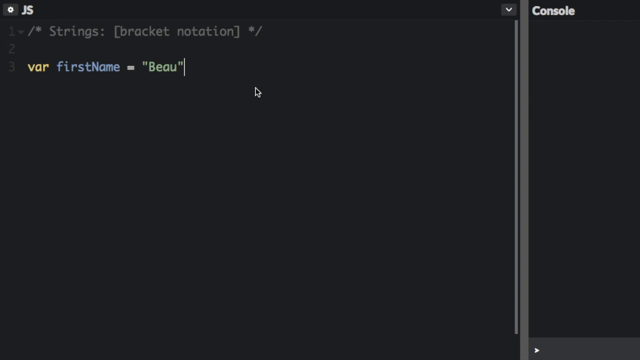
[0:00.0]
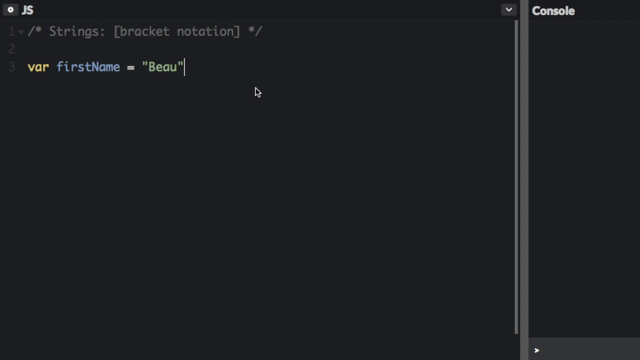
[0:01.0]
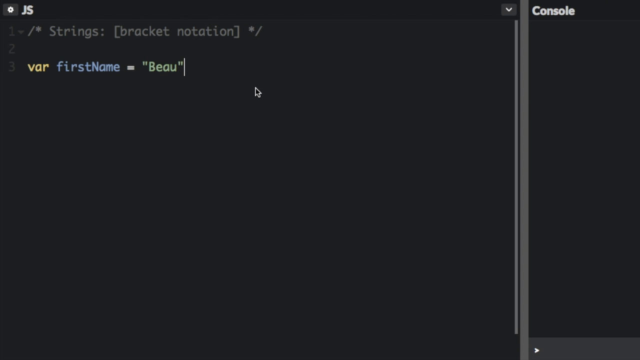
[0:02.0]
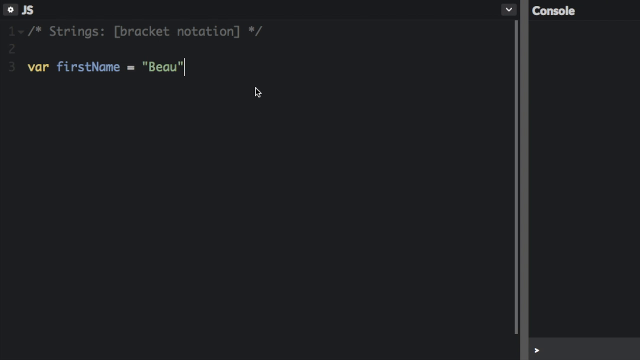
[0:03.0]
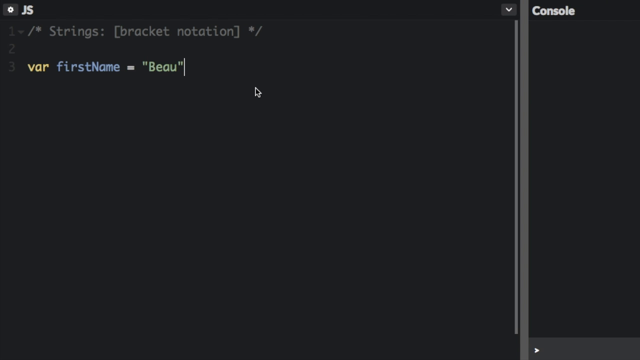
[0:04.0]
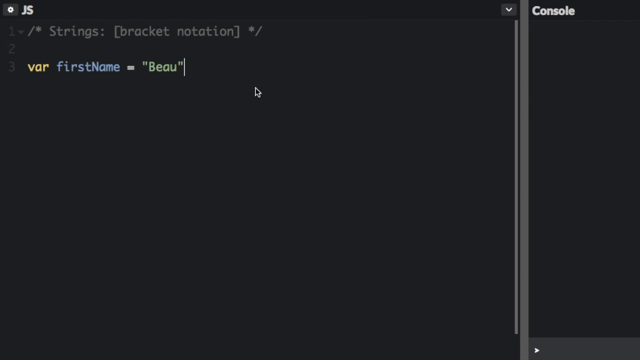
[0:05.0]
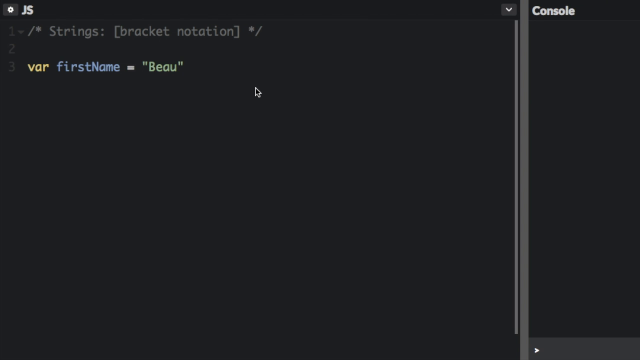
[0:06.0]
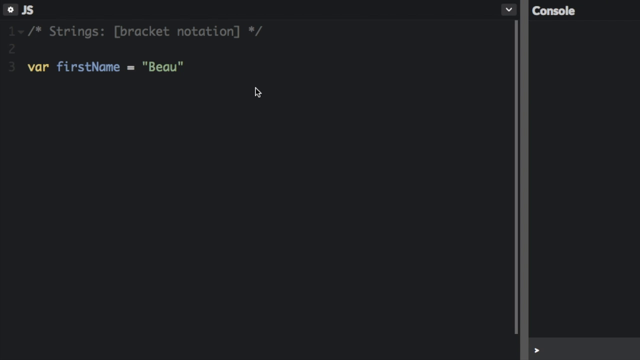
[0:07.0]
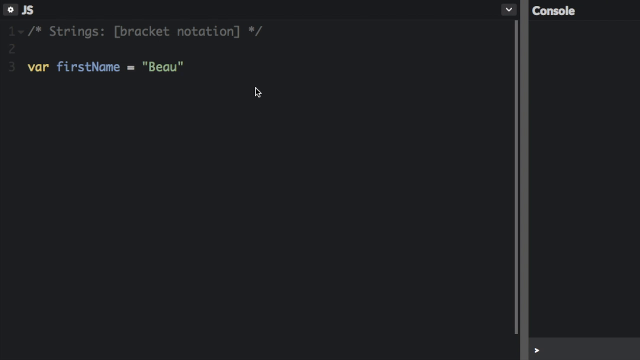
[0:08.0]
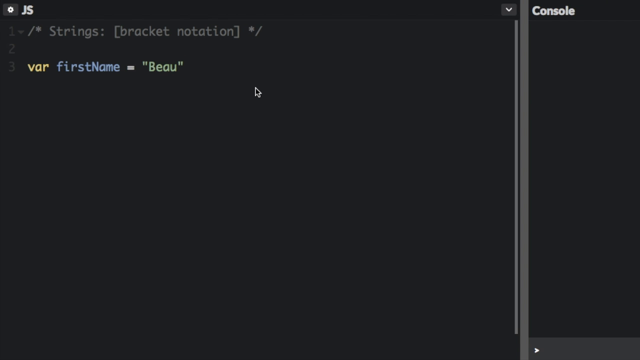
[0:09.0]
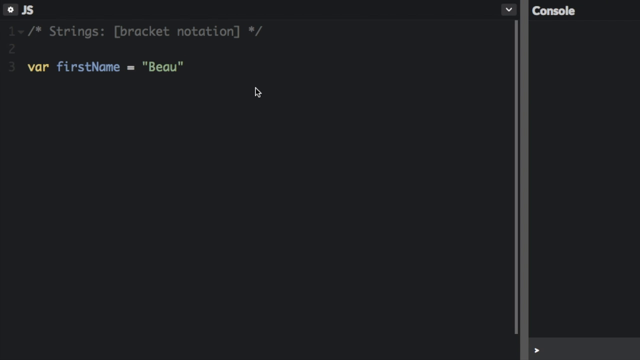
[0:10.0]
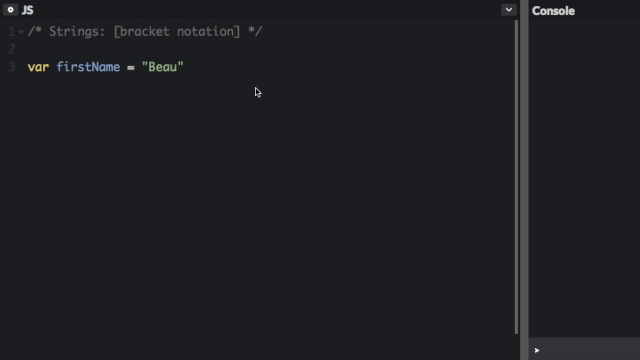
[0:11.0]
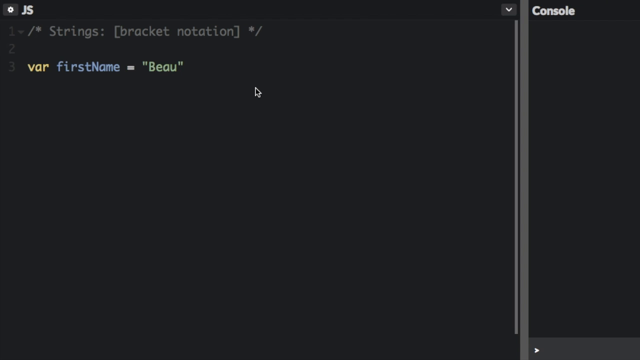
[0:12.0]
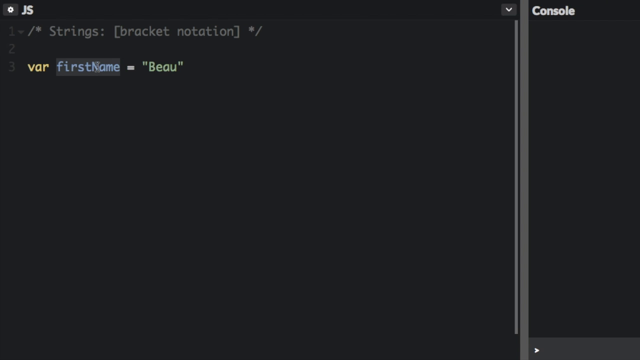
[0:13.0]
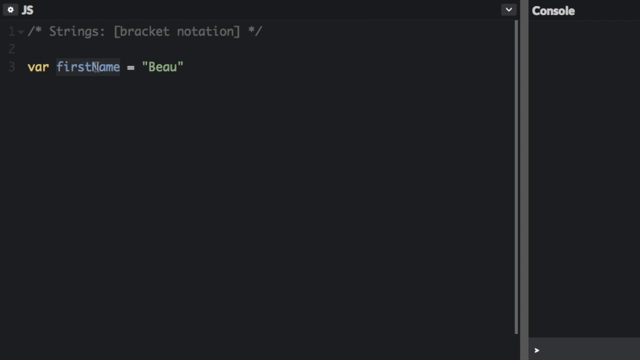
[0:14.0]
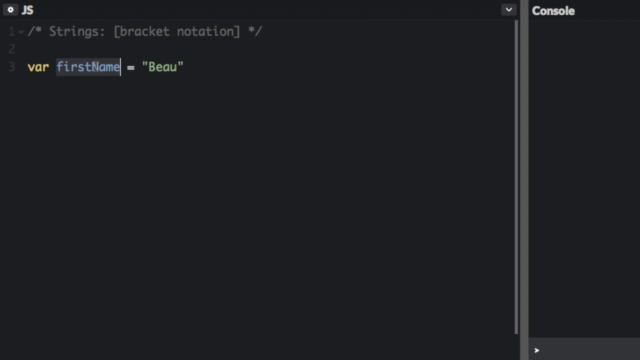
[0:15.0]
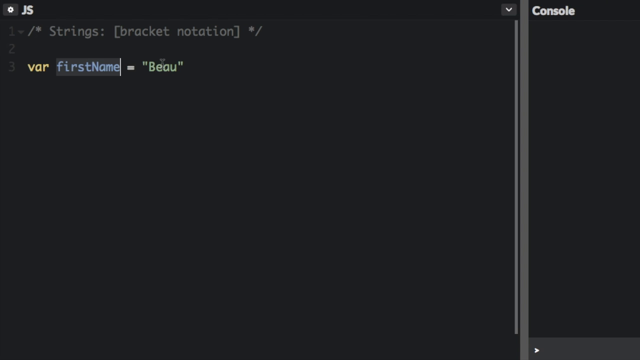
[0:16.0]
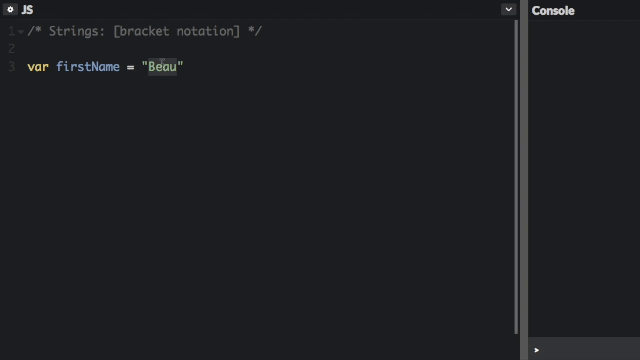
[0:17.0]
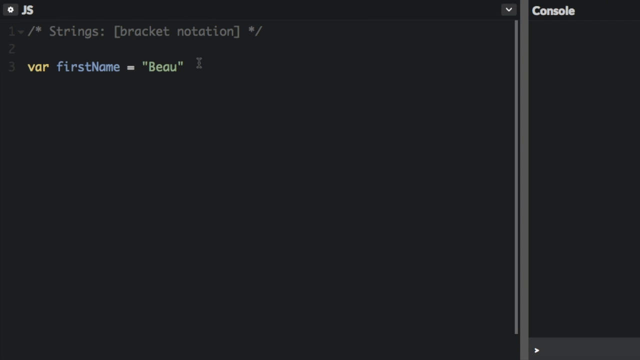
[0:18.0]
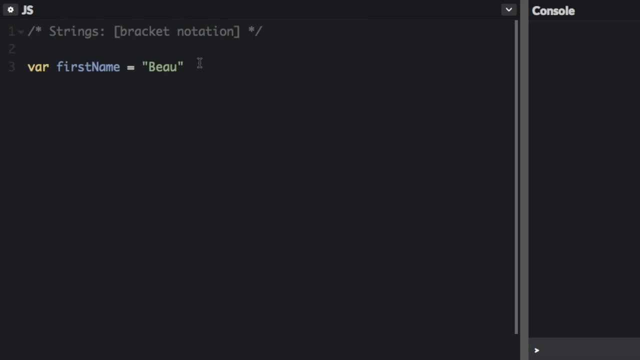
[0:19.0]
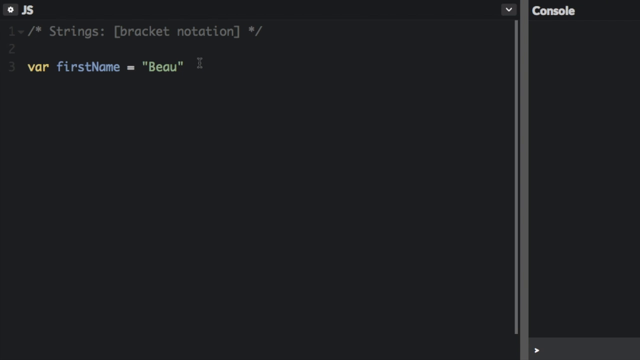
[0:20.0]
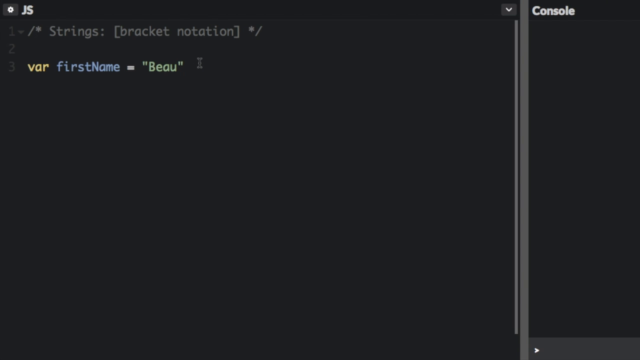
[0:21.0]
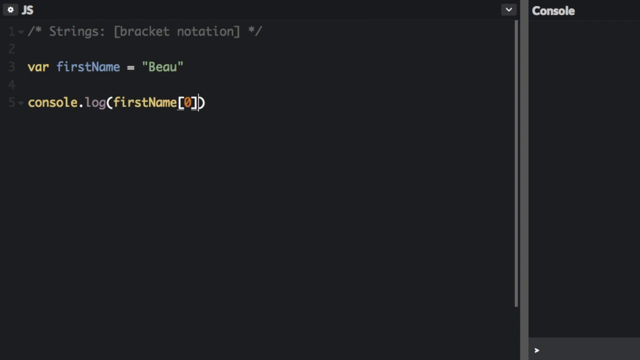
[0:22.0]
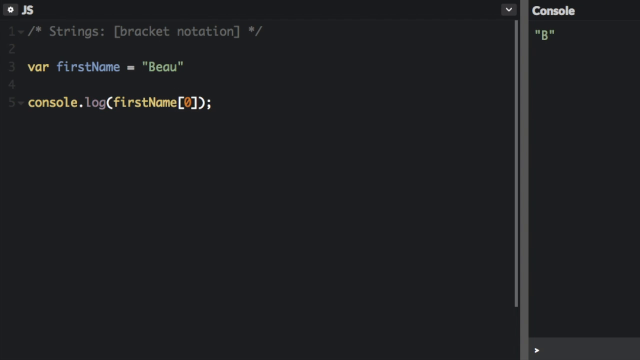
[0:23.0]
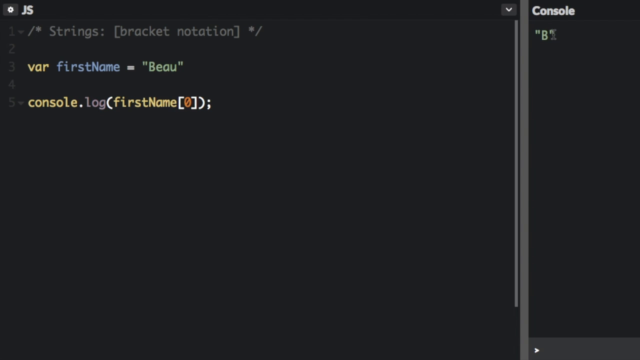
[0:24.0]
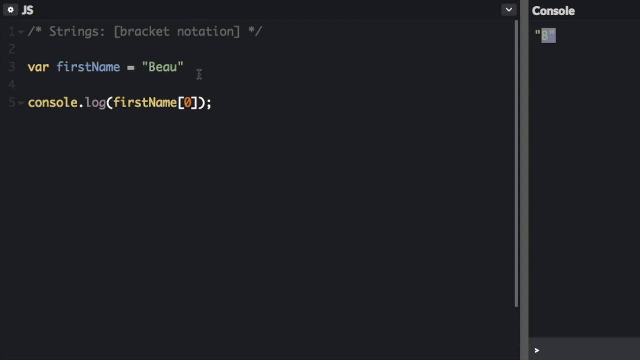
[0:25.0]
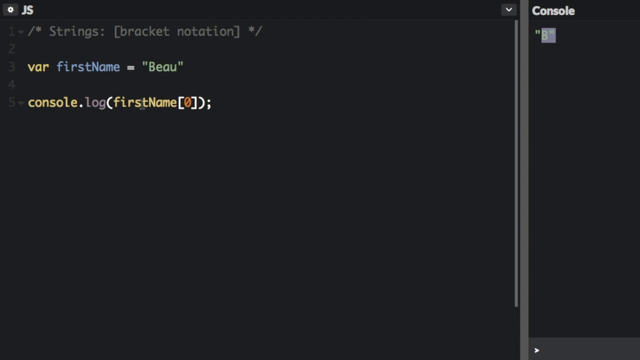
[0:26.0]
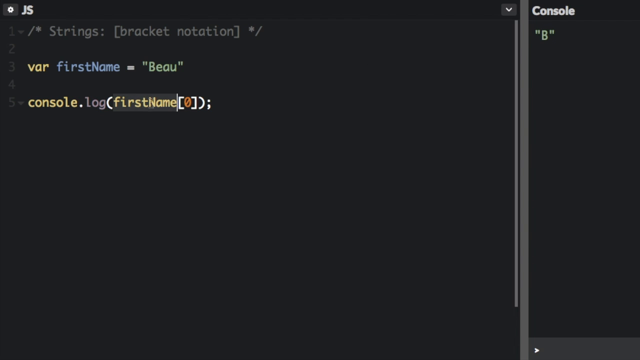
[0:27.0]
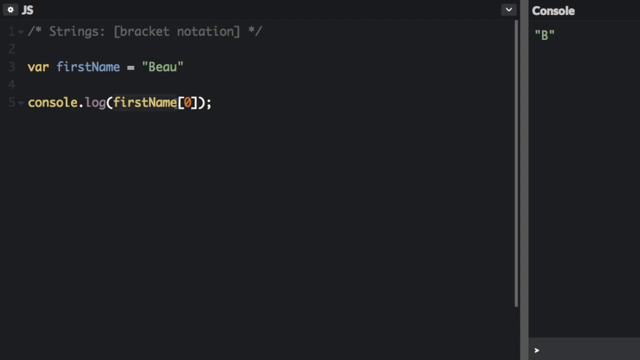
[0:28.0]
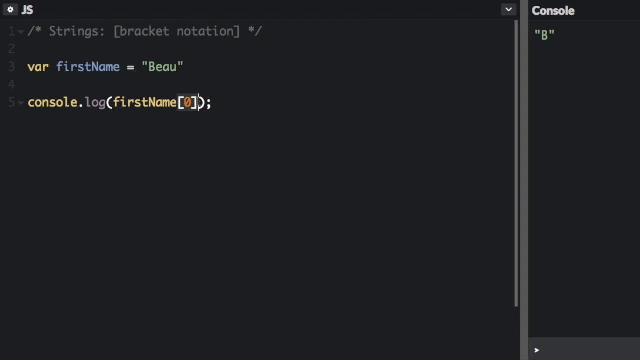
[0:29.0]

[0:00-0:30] The screen starts out almost blank. In the top corner is "JS", with a settings symbol, a kind of cog, to its left. About a quarter of the way in from the right side of the screen there is a vertical bar, and on the far side of it is the word "console". A dropdown arrow is just on the other side of the vertical bar. A much thinner gray stripe runs down the inside of the bar, on its left side, perhaps indicating a scroll bar. On the other side of the screen, in very faint text, is the number 1, followed by possibly a dash and then "/* strings: [bracket notation] */". Apart from that, the screen is almost entirely black, but text begins to appear.